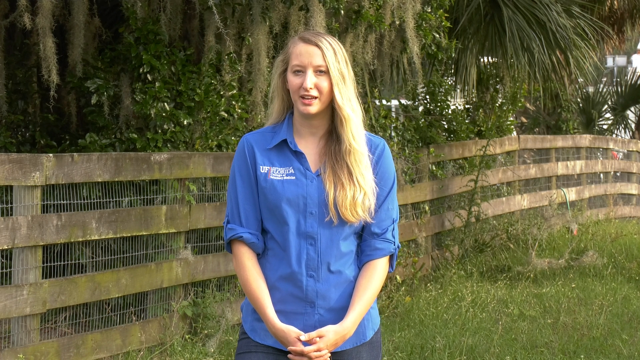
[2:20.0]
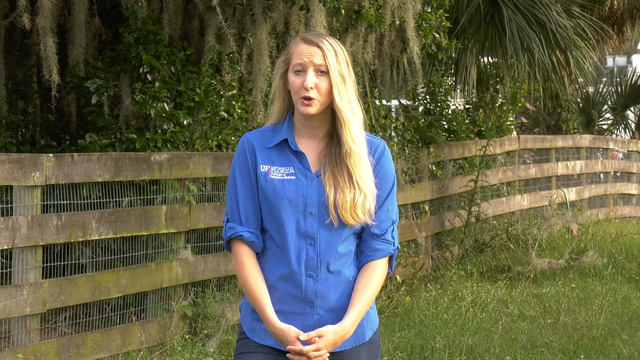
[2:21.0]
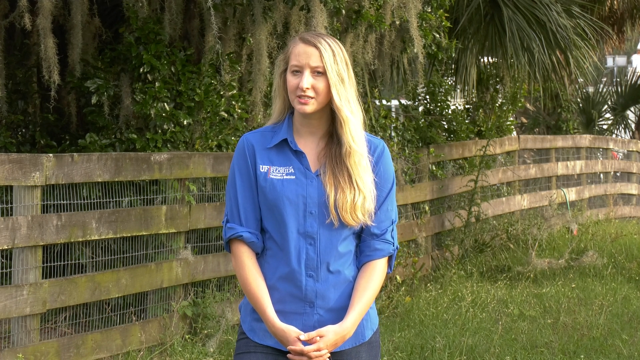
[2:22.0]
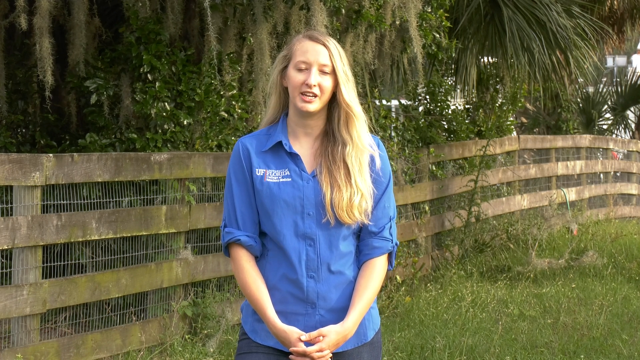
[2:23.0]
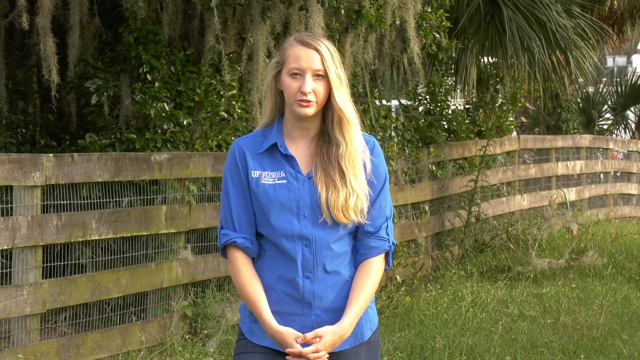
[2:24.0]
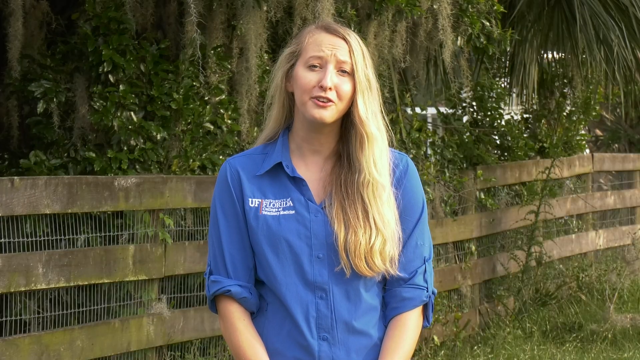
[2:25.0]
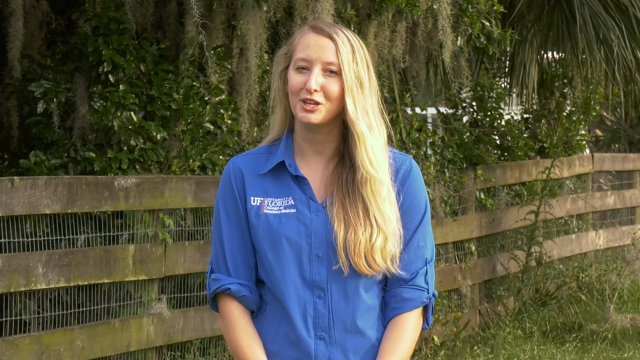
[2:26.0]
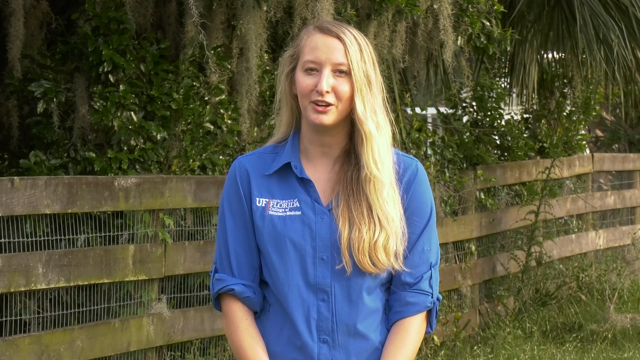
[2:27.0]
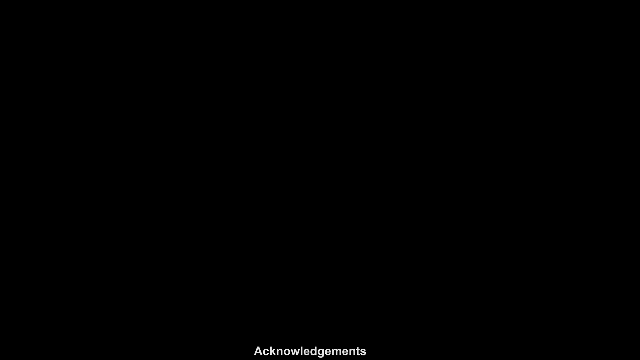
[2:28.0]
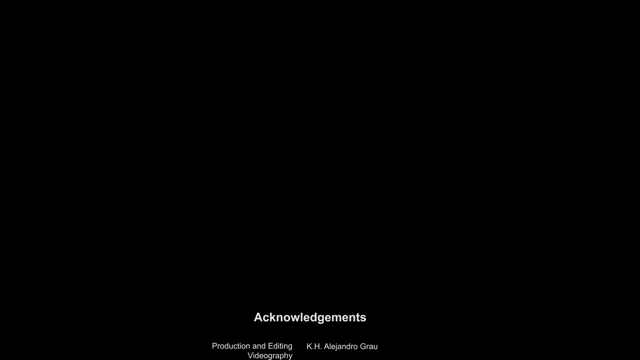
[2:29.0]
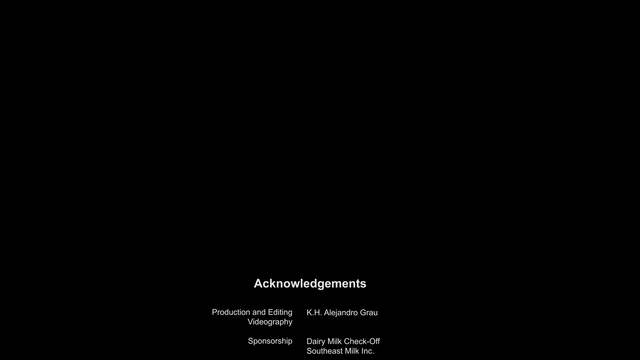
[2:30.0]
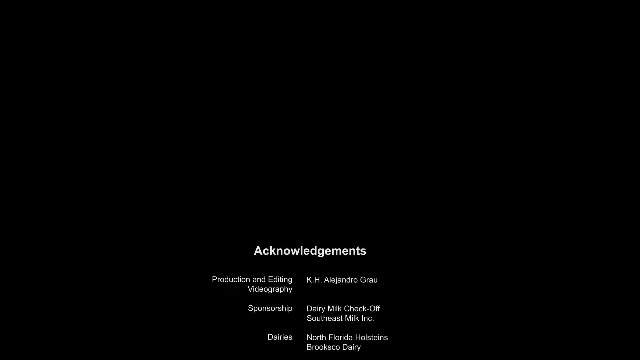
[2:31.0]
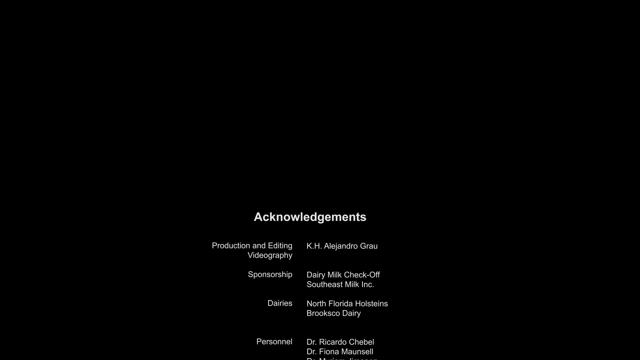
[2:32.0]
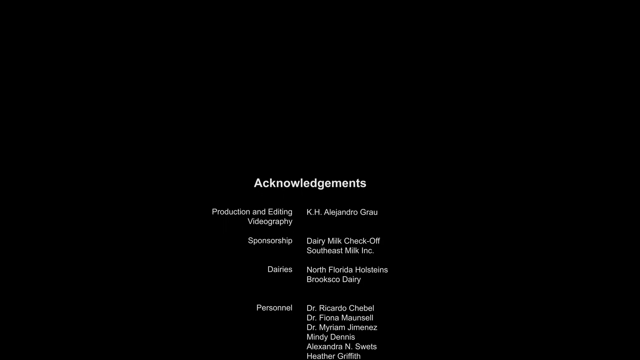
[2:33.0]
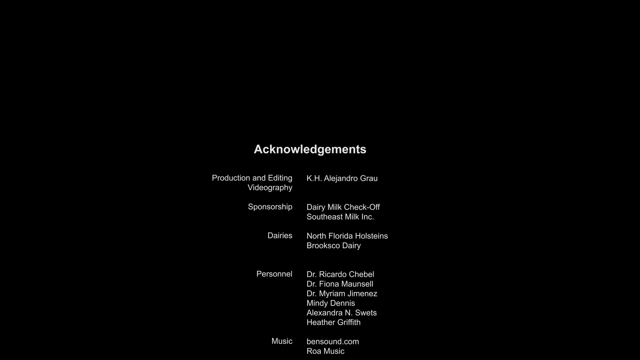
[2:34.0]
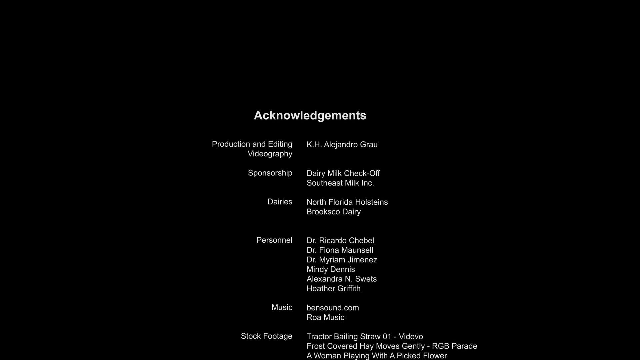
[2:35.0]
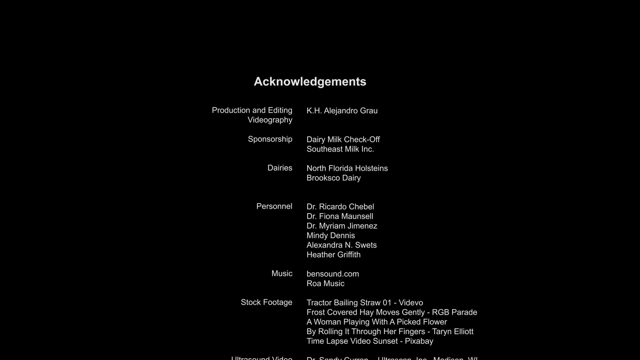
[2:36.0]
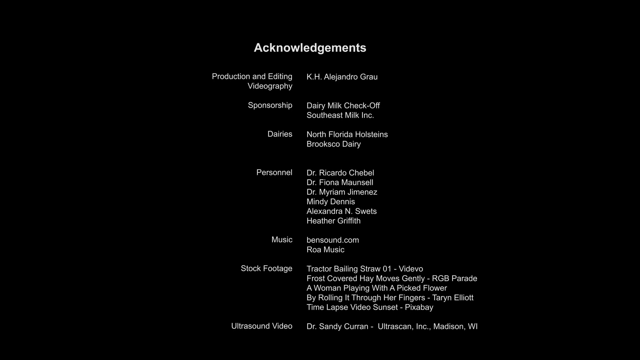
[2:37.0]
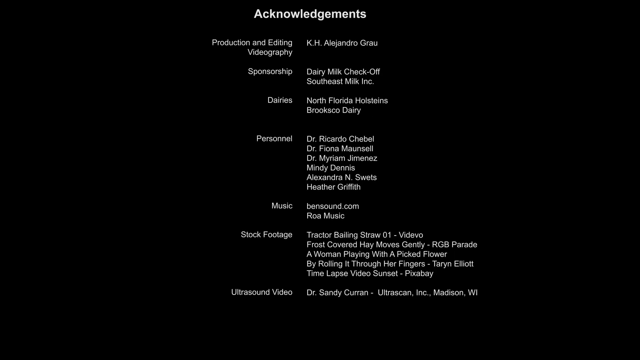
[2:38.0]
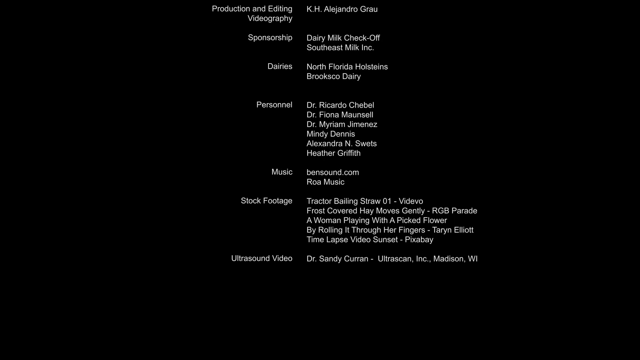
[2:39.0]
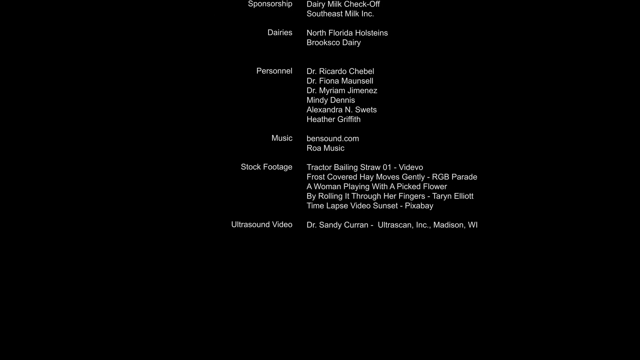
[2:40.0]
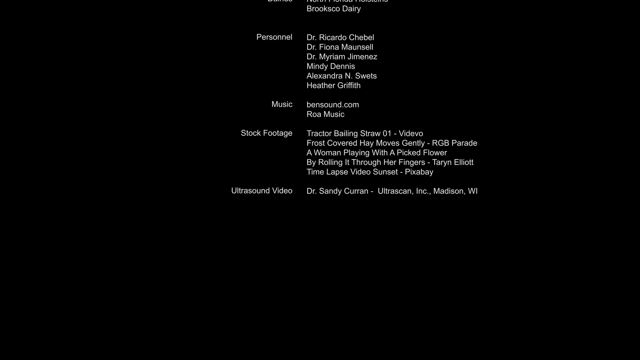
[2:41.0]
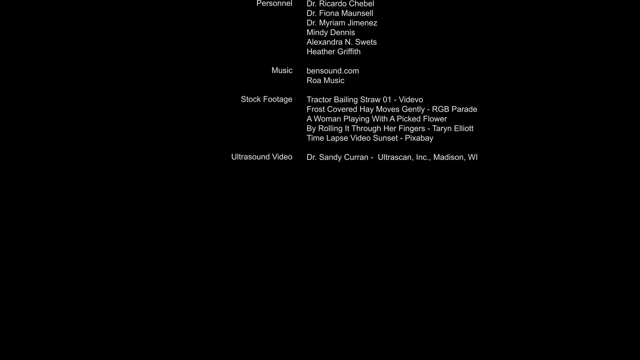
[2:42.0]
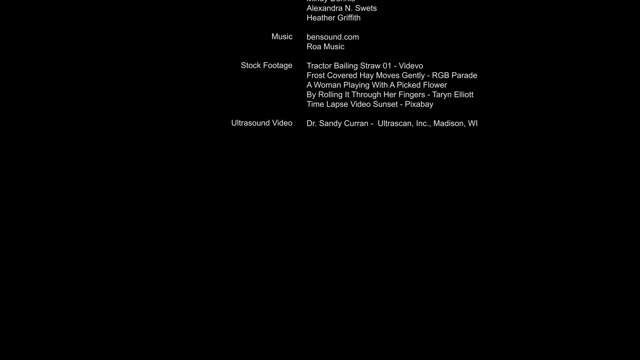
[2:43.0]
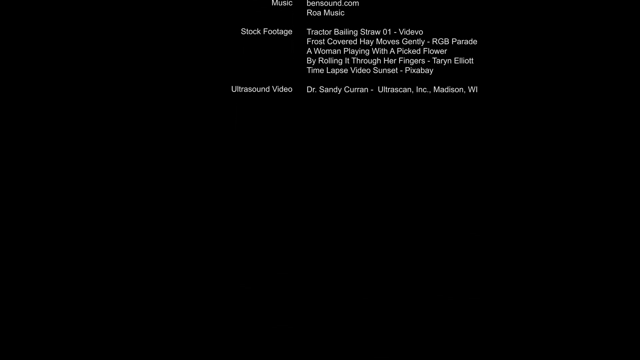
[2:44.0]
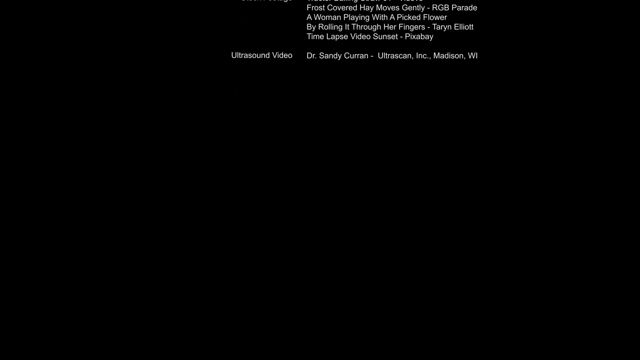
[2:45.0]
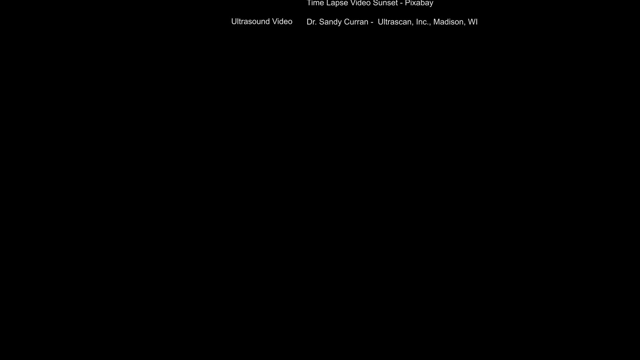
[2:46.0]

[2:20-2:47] Alexandra talks to the camera, with a lot of foliage and trees in the background behind her. Acknowledgments and credits follow for everyone involved in making the video, including production, editing, sponsorship, personnel, music, stock footage and ultrasound videos.